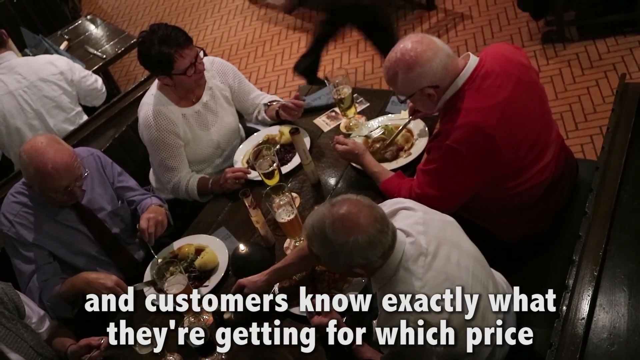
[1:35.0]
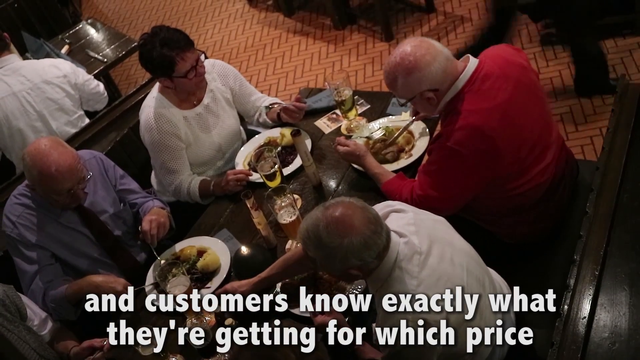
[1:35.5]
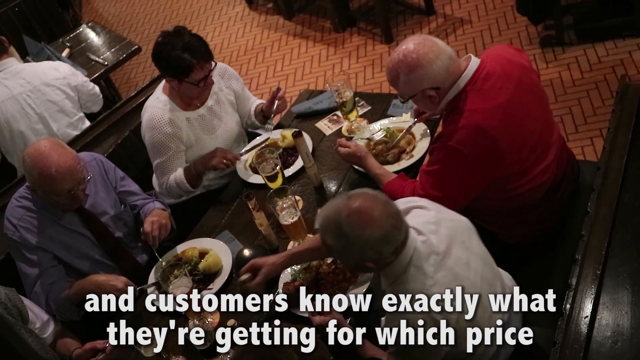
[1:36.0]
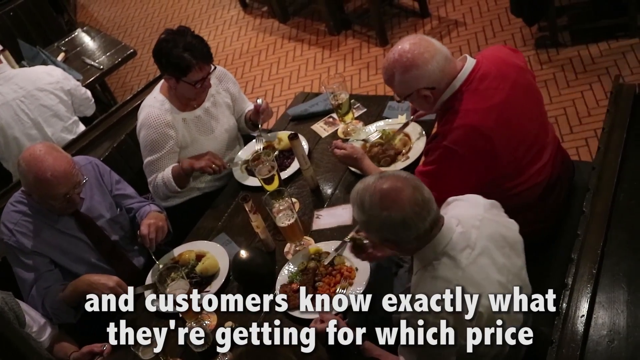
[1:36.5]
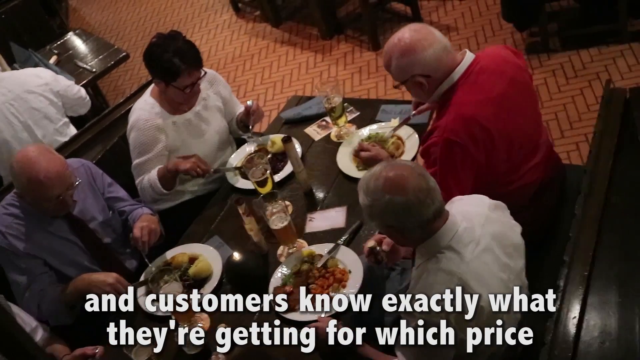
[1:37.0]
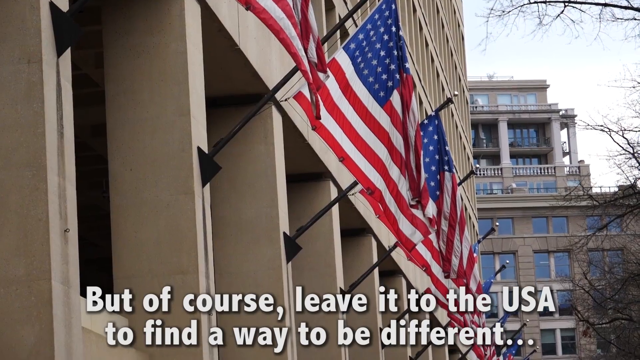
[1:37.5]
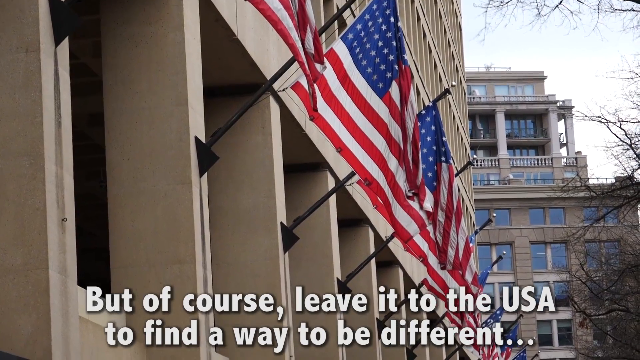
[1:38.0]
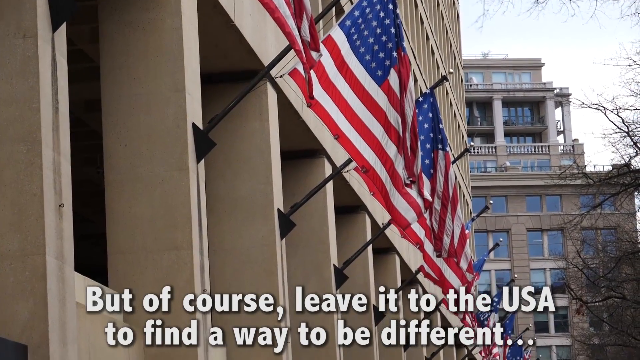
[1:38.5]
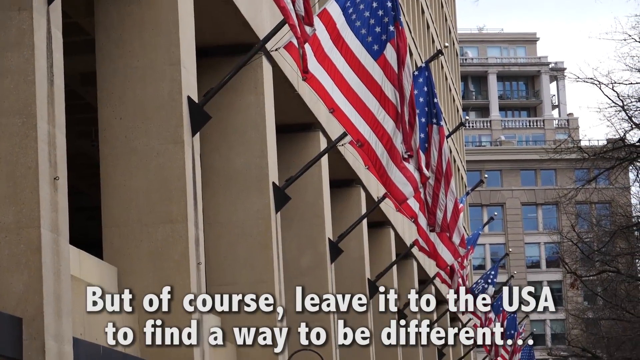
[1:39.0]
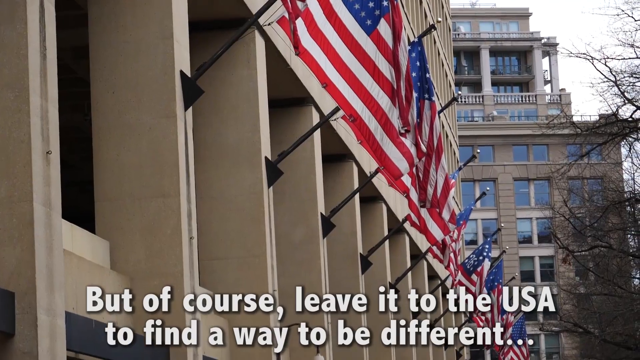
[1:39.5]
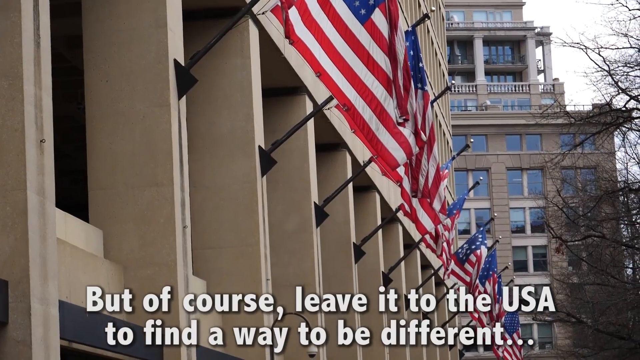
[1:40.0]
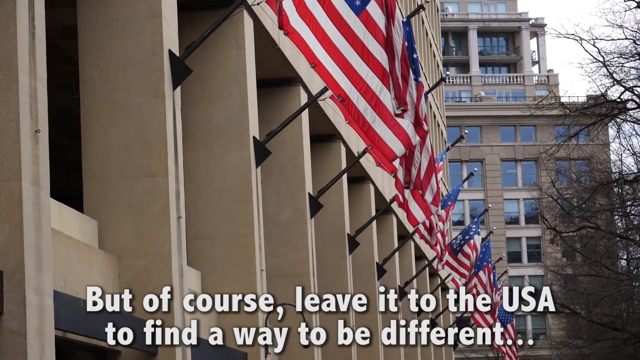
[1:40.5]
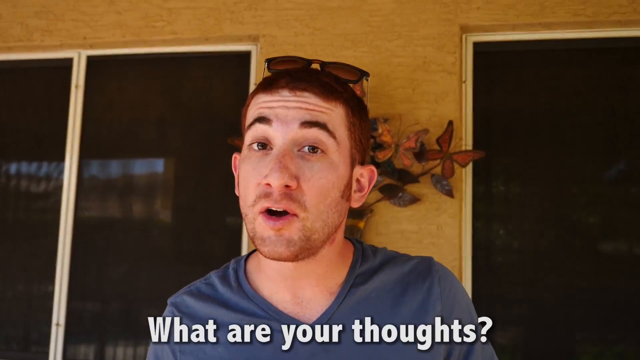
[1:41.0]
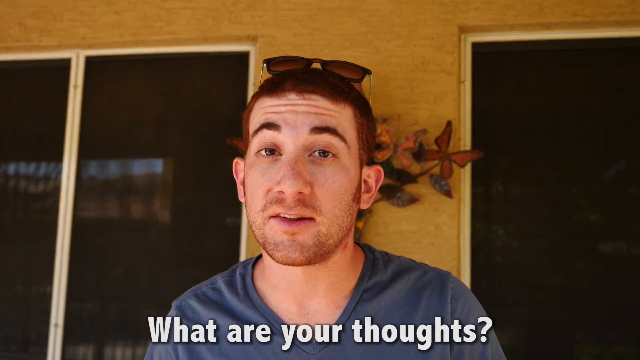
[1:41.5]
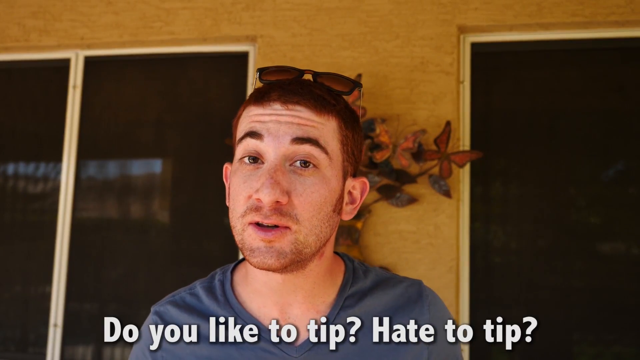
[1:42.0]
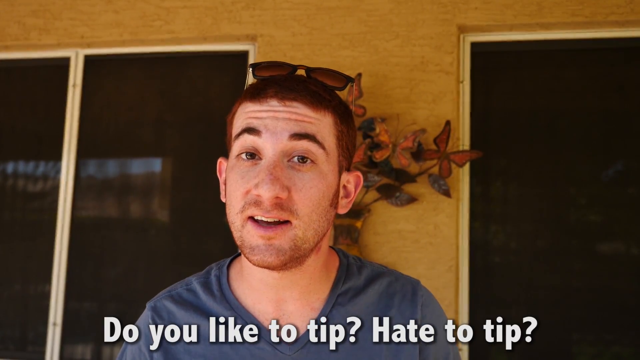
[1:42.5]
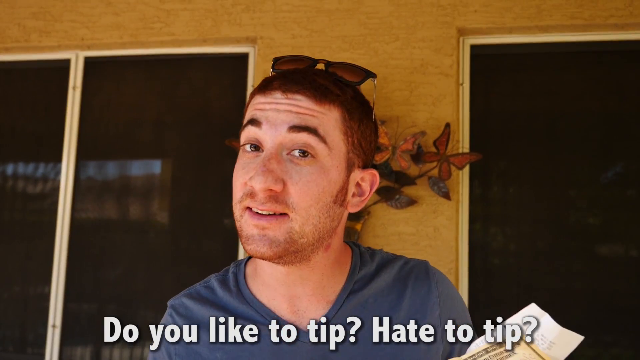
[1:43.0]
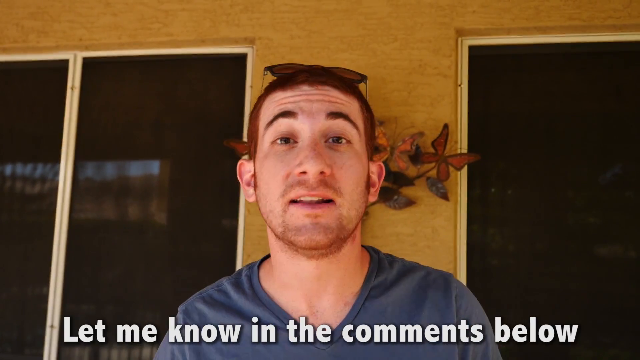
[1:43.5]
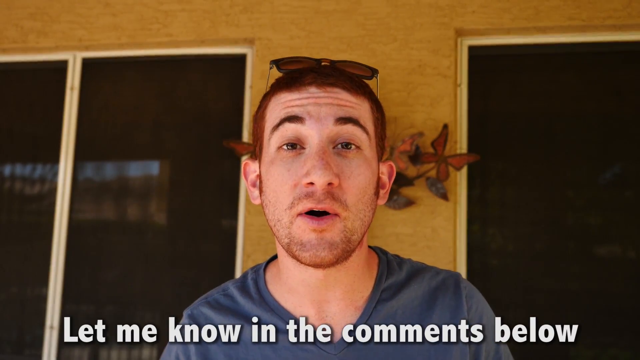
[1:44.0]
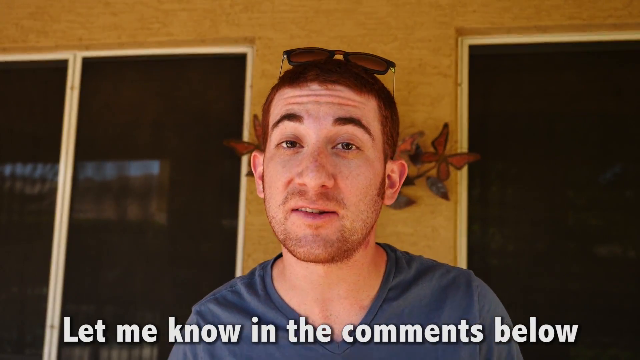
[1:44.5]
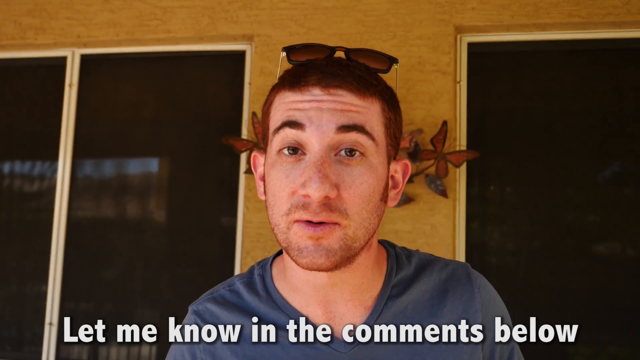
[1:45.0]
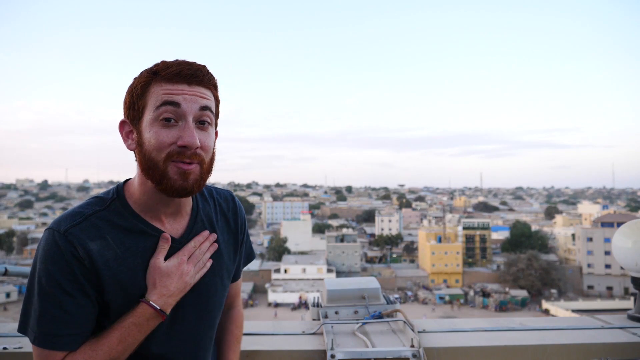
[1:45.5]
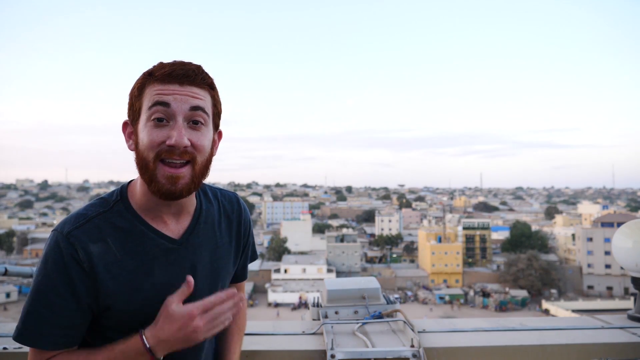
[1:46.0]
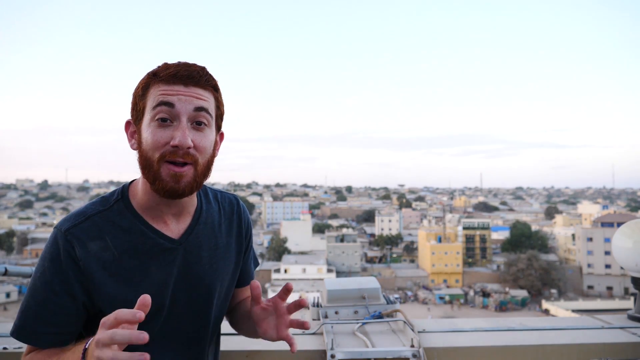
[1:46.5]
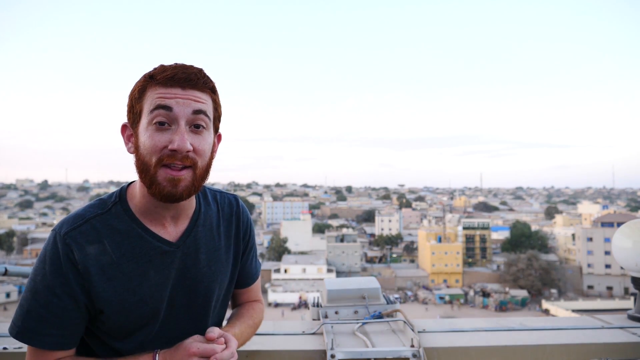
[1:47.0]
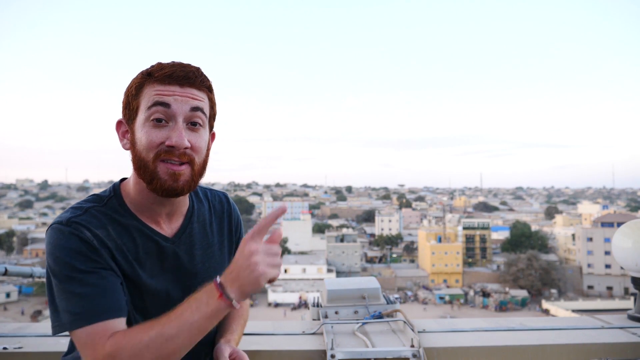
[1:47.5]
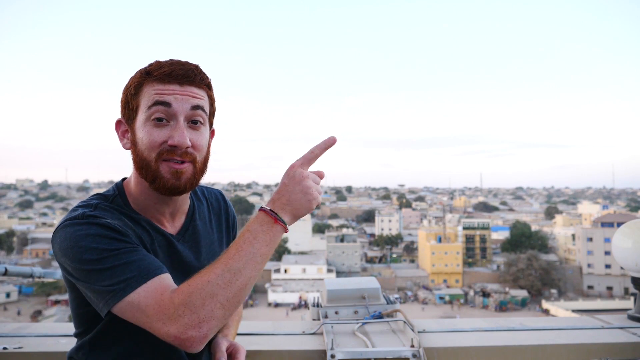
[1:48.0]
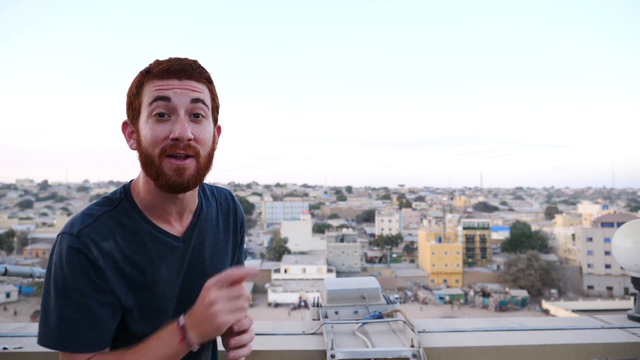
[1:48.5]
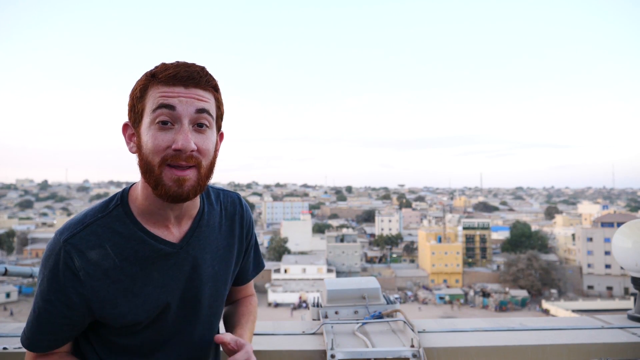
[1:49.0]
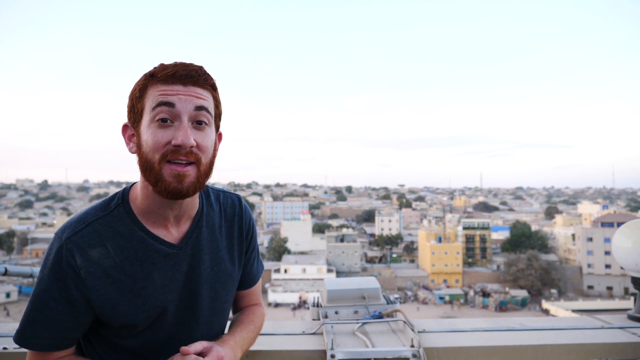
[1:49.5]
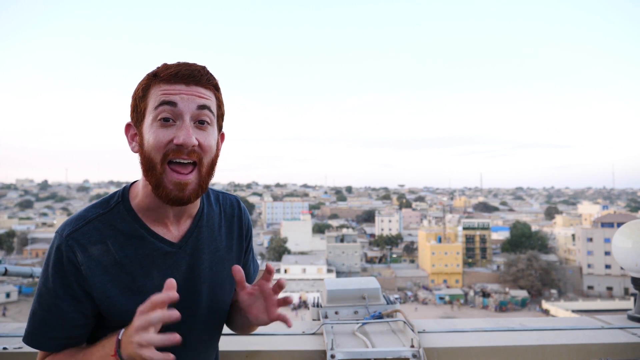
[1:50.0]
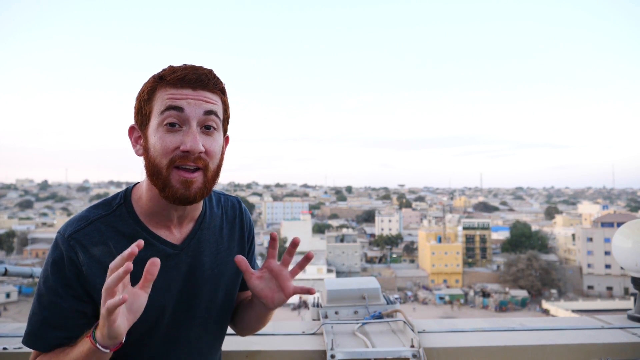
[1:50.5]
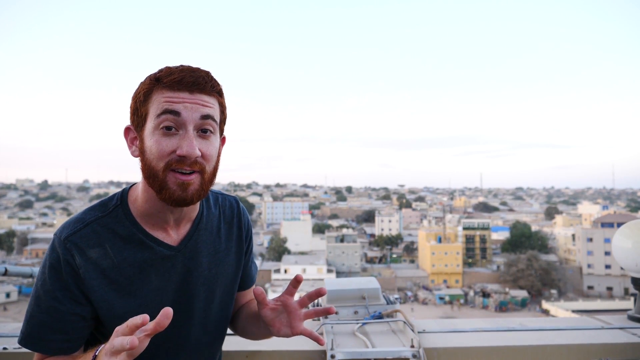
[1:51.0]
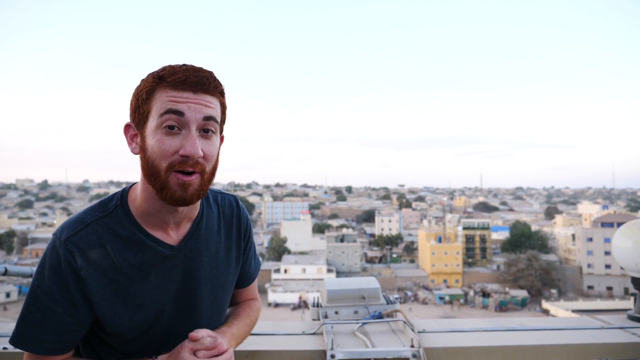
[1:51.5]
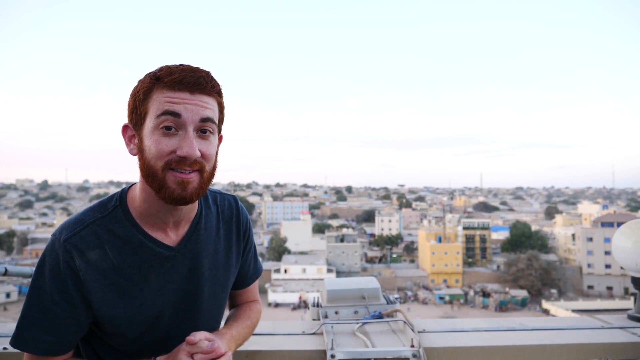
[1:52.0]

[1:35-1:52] An overhead view looks down at a black table with four people sitting across from each other and side by side in a two-by-two formation. There is food on the table, and the people are cutting their food and reaching across. Notably, a man who appears to be older wears a red long-sleeve shirt, possibly a sweater. They seem to be out for a group dining experience, and a person walks by in the background. It then zooms out to a close-up of the side of a building with various United States flags dangling, apparently in a city in a well-populated area, with another building with glass windows in the background. Next, the man who has been in the whole video stands against a beige-like building talking, as if wrapping up the video, with windows in the background and a plant-like fixture on the wall. The final scene shows the man on the left of the frame talking; he has very reddish hair, a red beard and a green shirt, and seems to be talking to, maybe, his YouTube subscribers, asking them to follow or like his content.